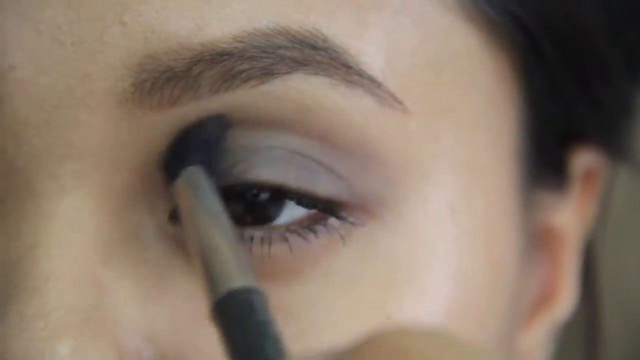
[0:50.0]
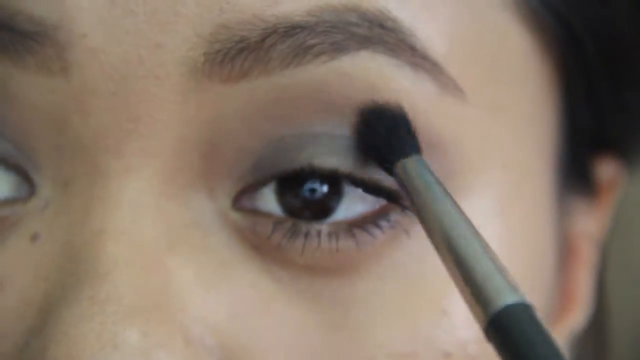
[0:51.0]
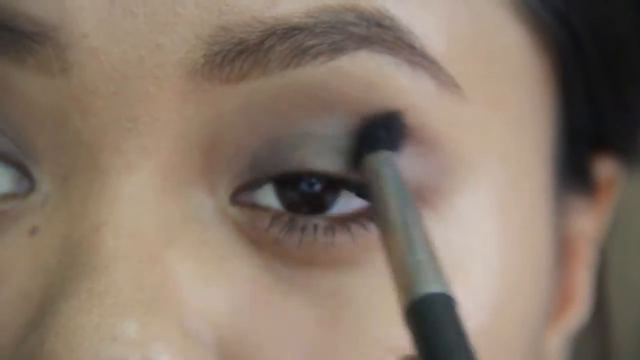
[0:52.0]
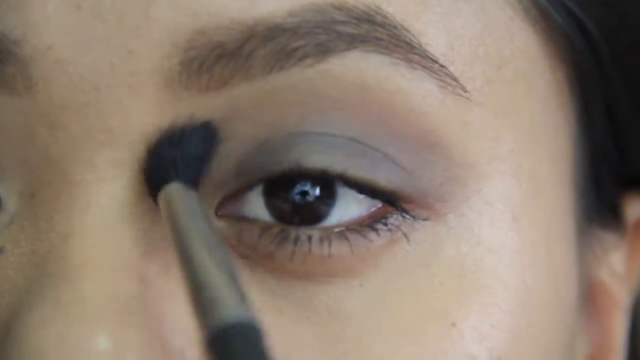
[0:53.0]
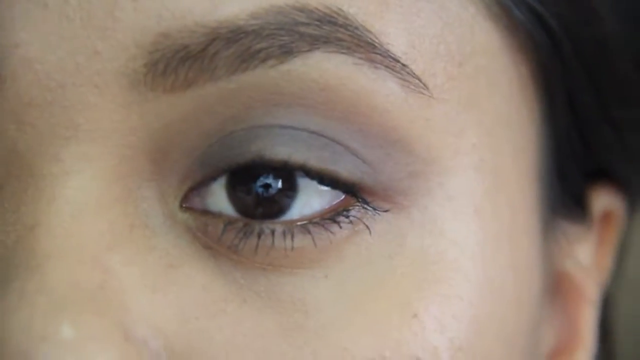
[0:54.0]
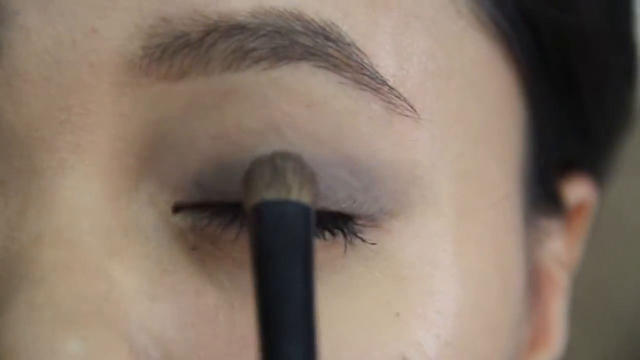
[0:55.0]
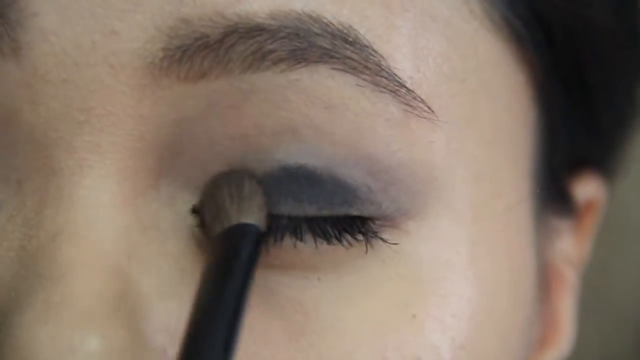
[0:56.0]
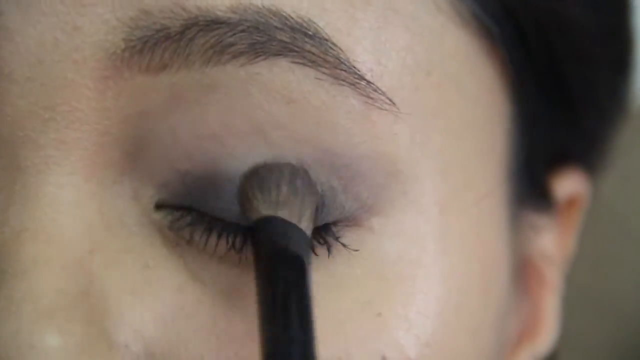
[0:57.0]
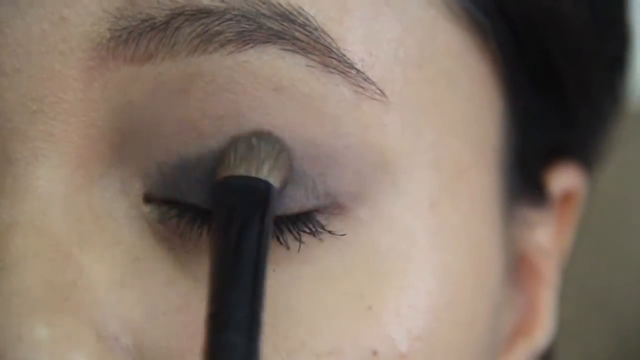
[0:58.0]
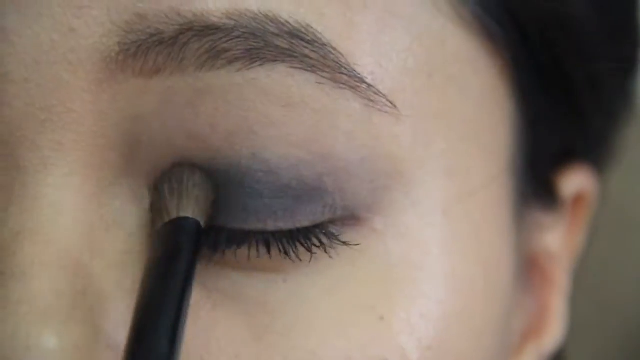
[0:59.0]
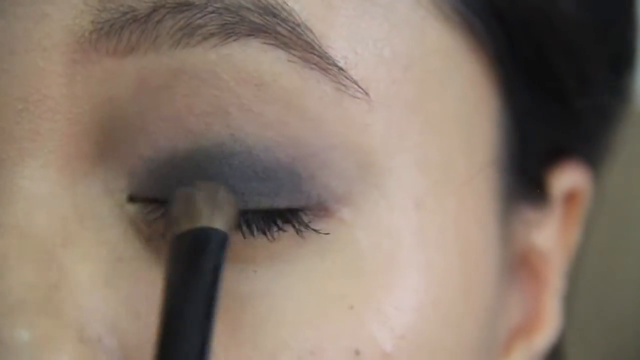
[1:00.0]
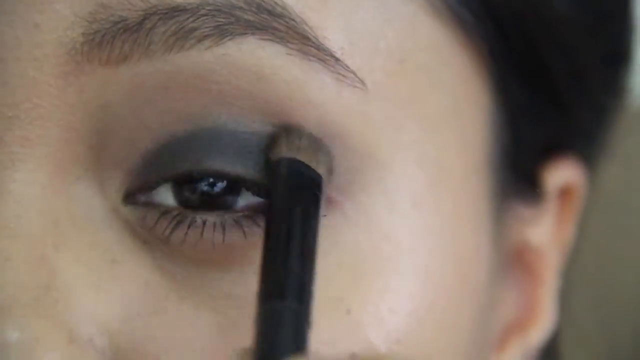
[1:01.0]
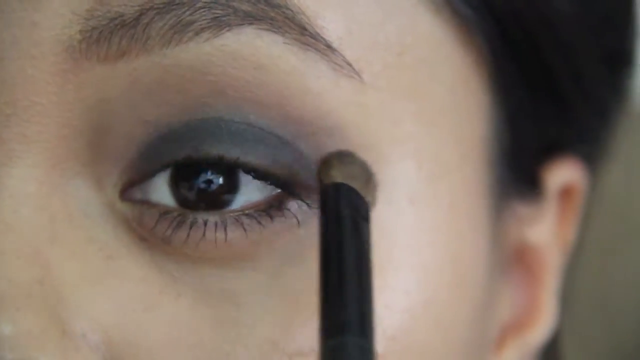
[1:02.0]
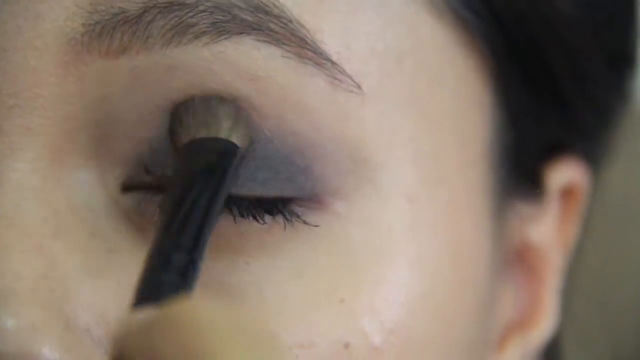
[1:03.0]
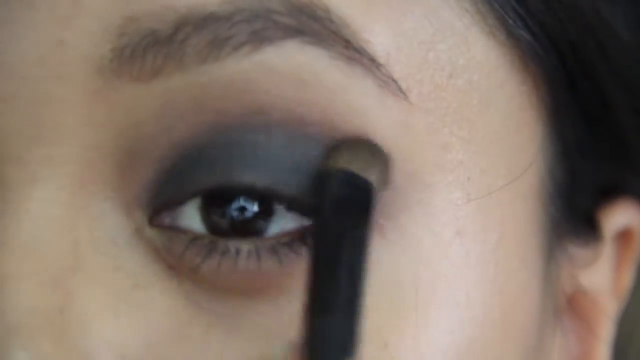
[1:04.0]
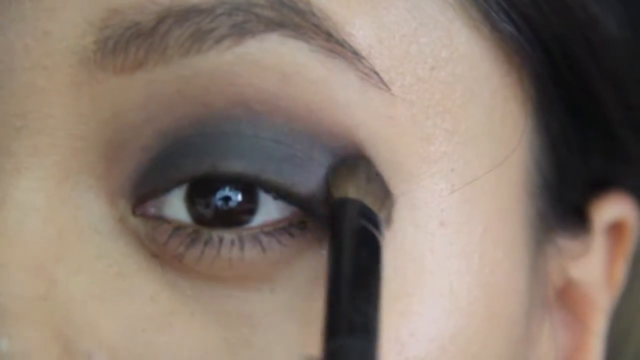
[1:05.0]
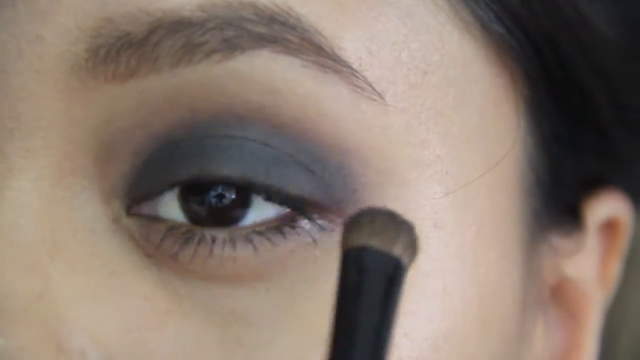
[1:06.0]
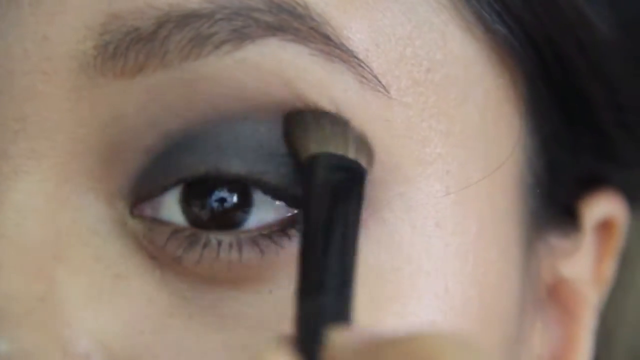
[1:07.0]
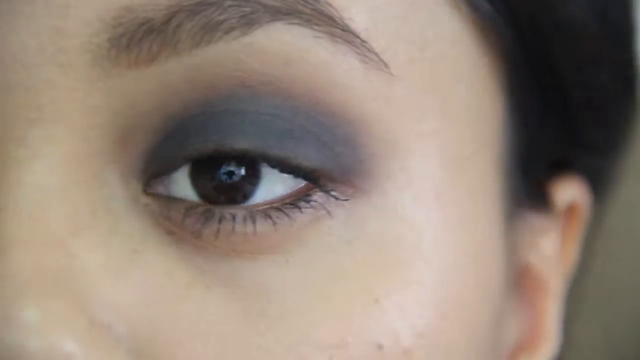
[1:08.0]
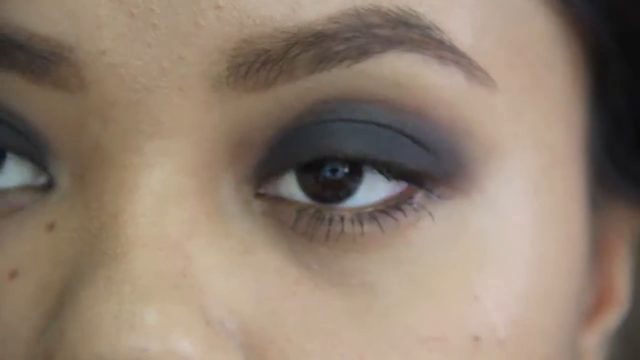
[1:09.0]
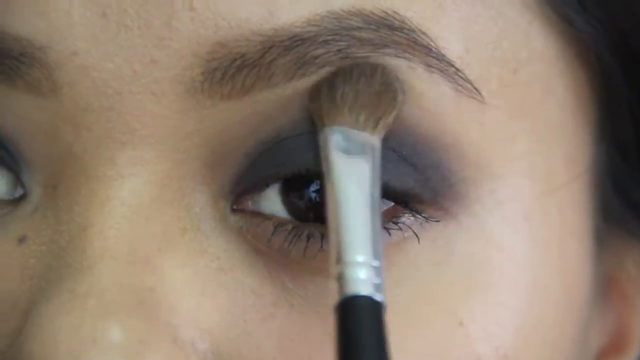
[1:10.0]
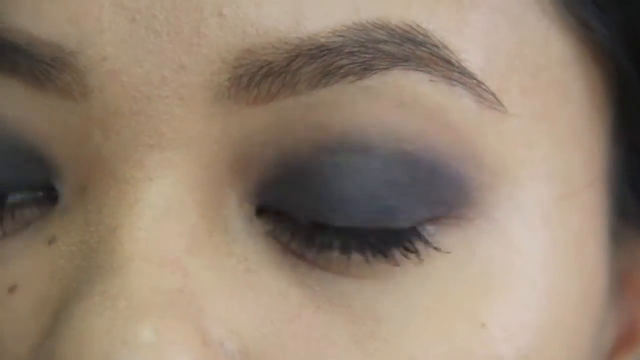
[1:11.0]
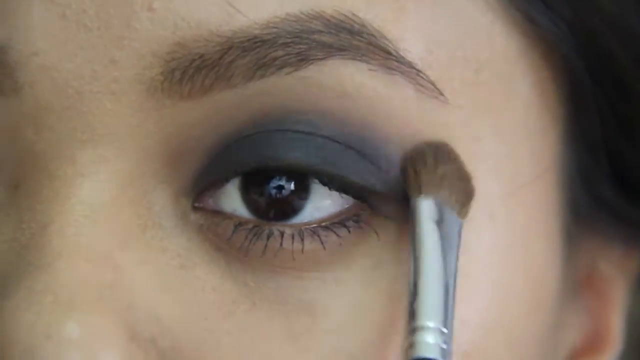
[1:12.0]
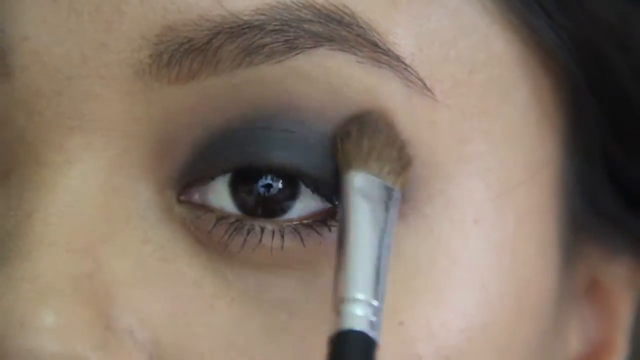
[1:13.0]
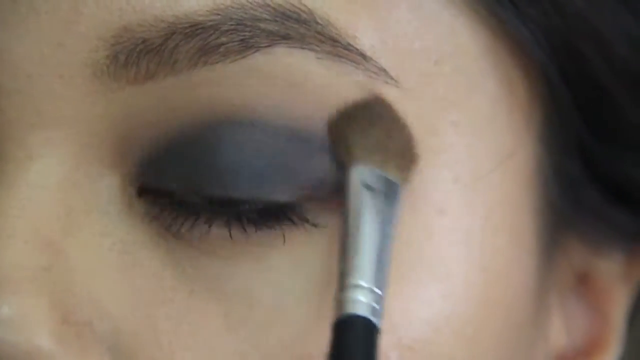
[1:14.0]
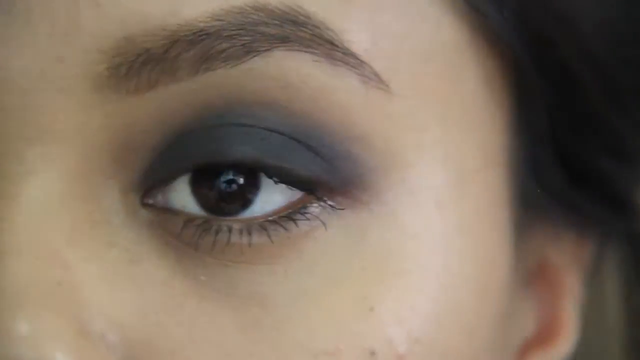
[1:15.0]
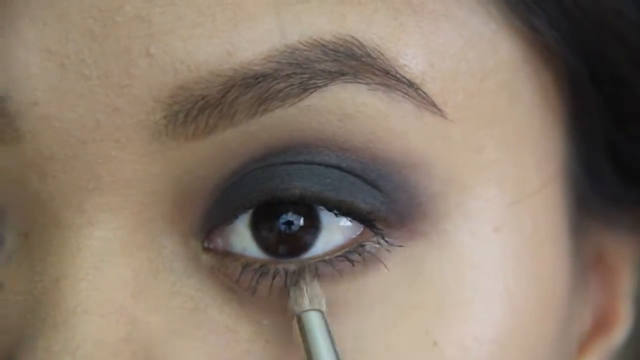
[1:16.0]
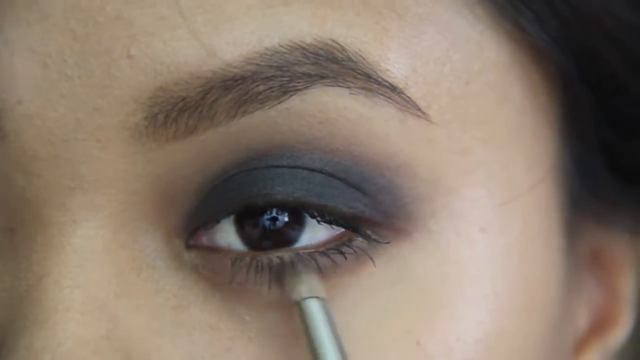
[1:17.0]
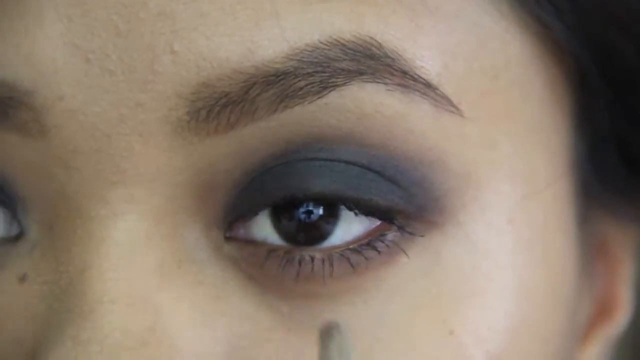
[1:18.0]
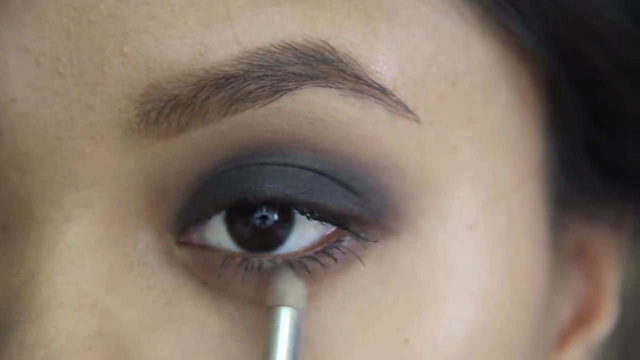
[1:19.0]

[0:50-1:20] She continues with her eyeshadow, showing each step in detail. She appears to work with a black eyeshadow, fading it in, then adds some brown on top. She then works on the lower side of the eye. She is still working on only one eye.